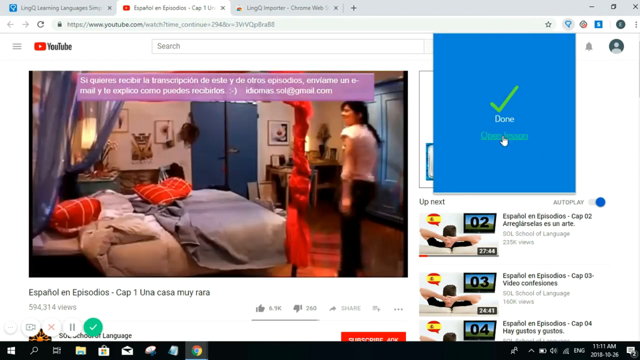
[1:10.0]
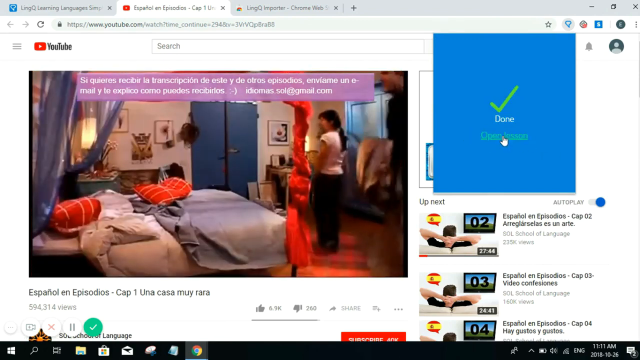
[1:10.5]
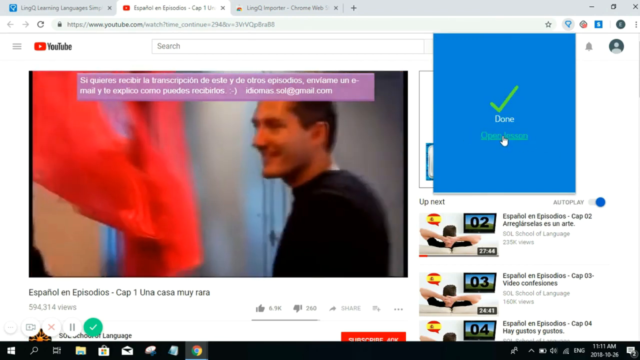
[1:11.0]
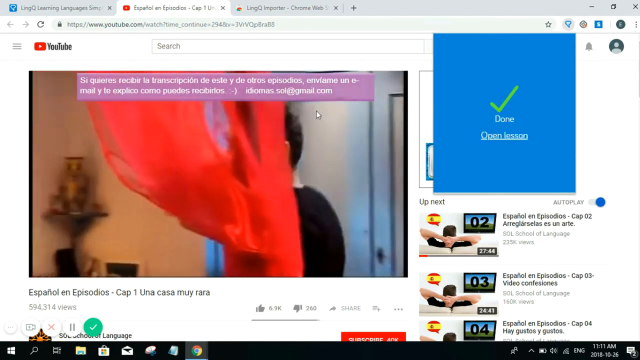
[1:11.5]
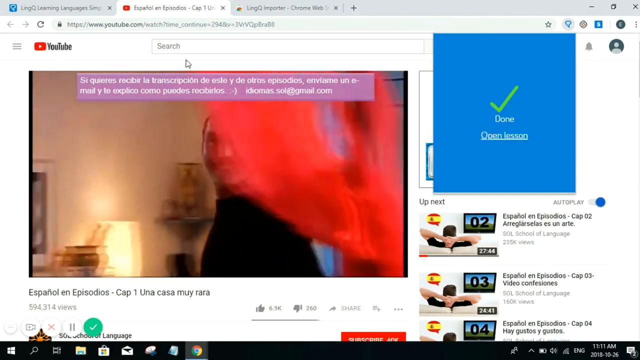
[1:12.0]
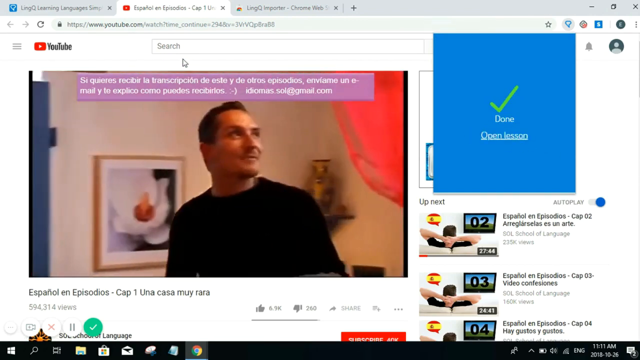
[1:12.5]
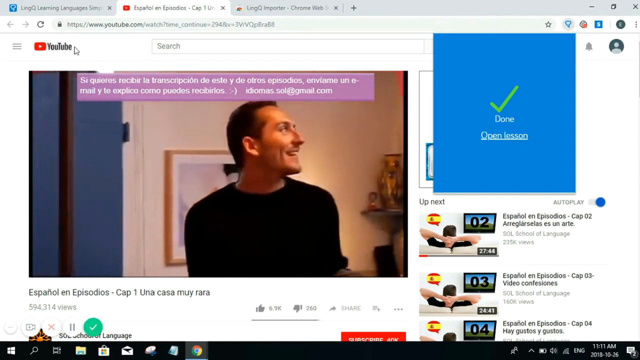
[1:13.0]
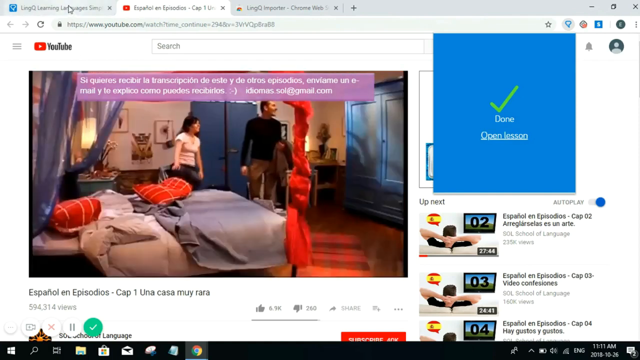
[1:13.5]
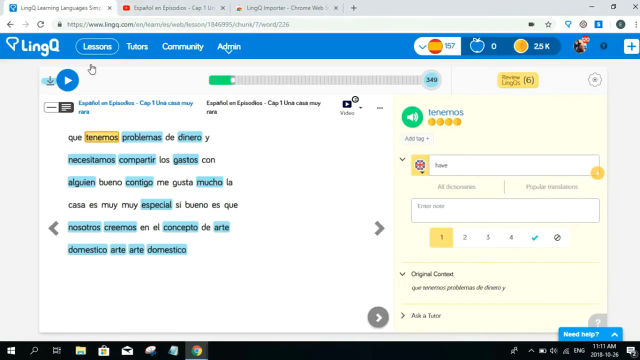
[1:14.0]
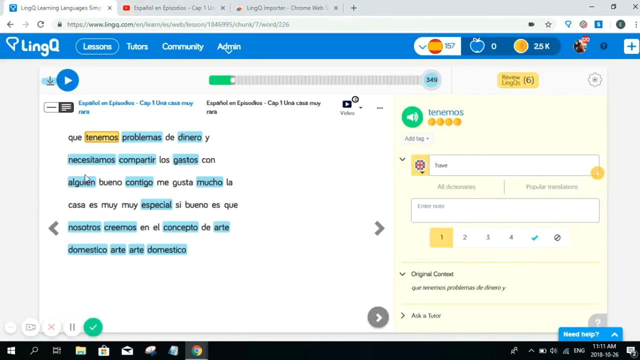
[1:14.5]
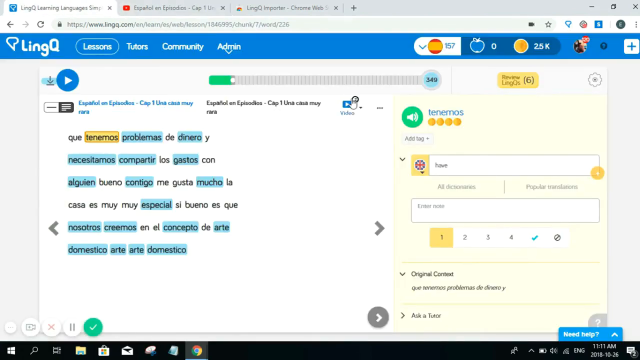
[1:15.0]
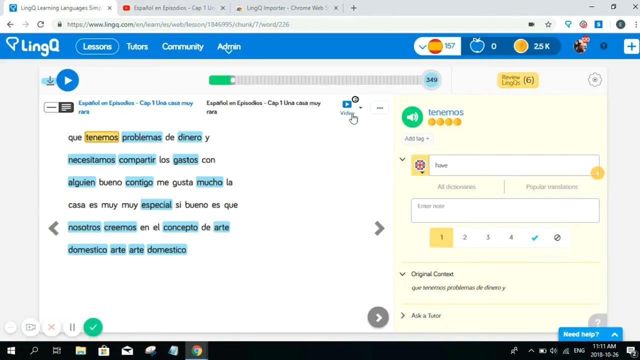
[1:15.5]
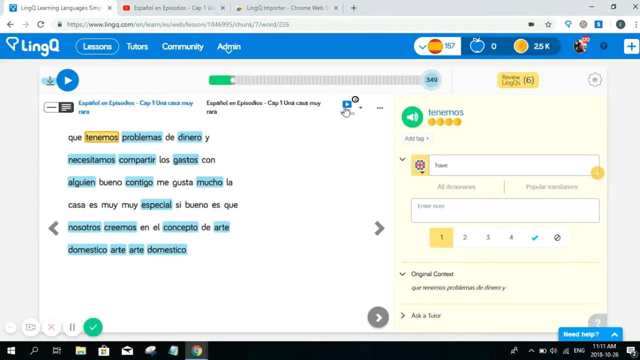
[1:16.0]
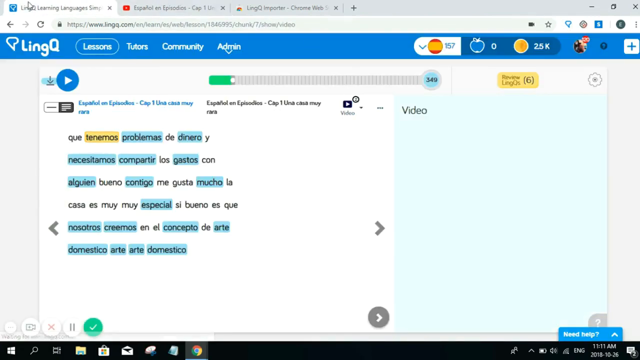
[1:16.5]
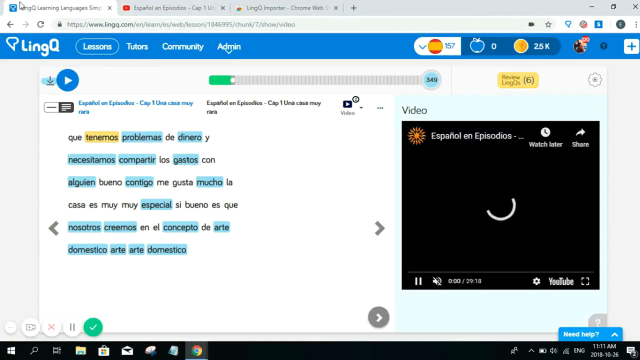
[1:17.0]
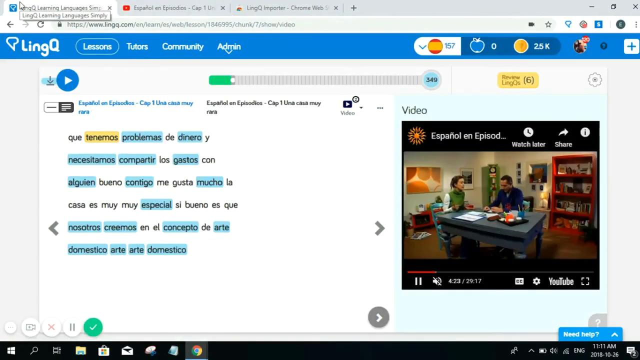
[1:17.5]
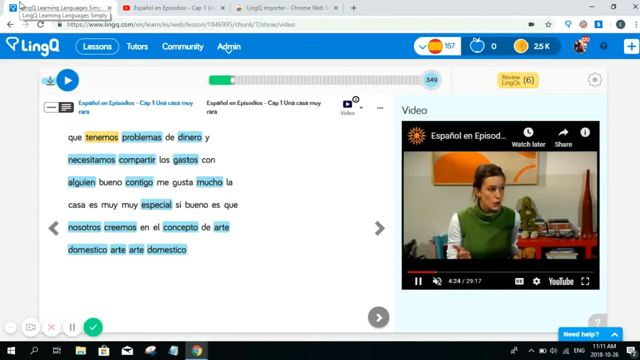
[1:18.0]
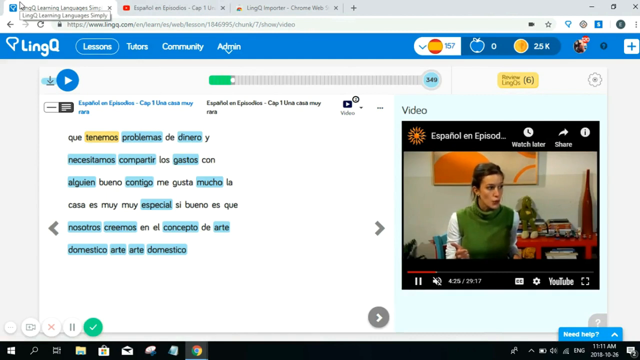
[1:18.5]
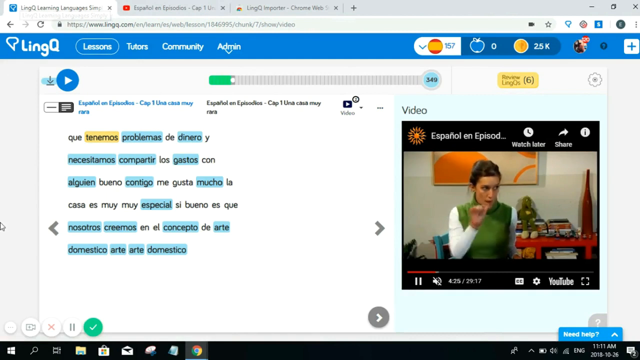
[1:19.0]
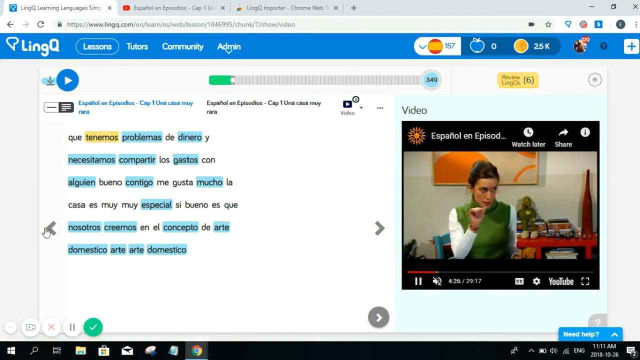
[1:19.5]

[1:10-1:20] The person opens the lesson on the Lingq extension, then goes back to the first tab, showing the Lingq screen with a paragraph written in Spanish. Some words are highlighted in blue and one word is highlighted in yellow. The YouTube video he used the extension on pops up, almost picture-in-picture, on the Lingq page. It appears to be the same show, possibly a different episode. The man wears a different shirt, what looks to be a navy blue button-up with the collar unbuttoned, and he talks to a woman who is probably the same woman, now in different clothes: a long-sleeved white shirt with a green vest.